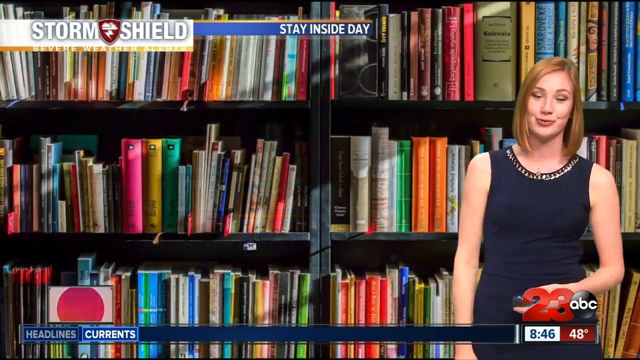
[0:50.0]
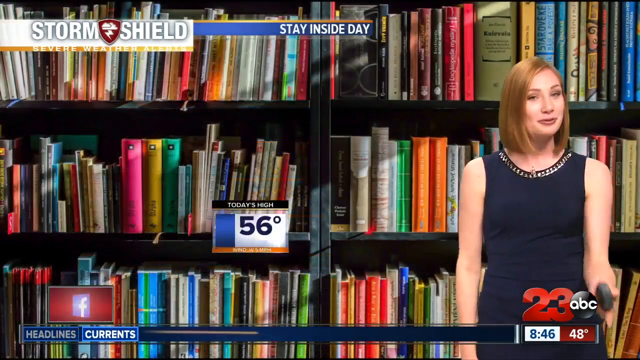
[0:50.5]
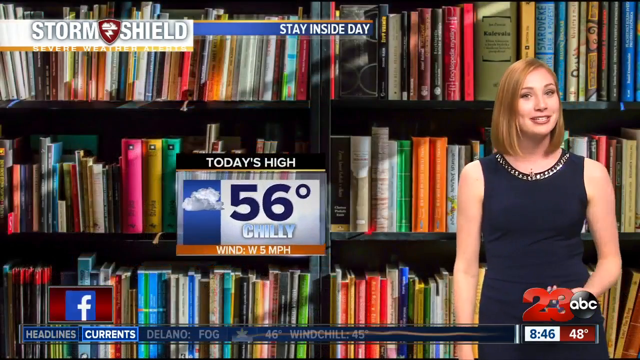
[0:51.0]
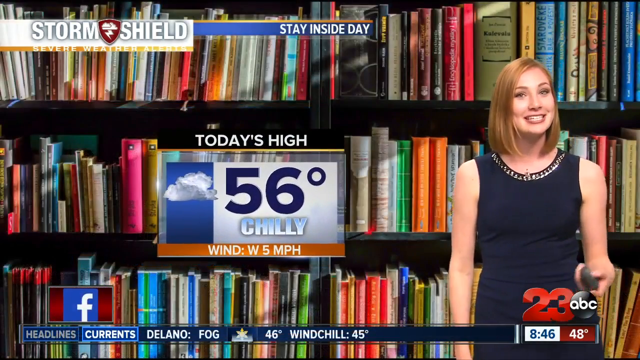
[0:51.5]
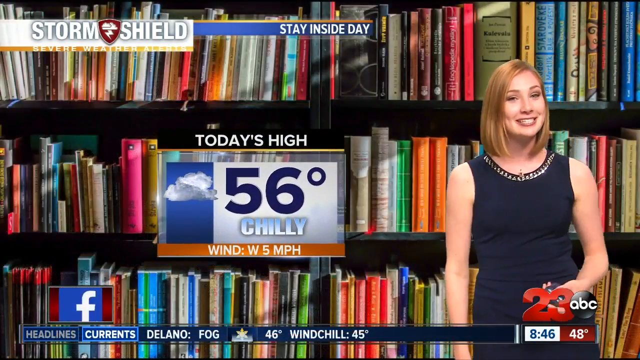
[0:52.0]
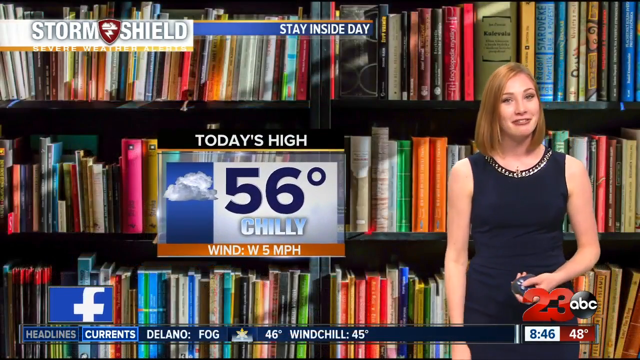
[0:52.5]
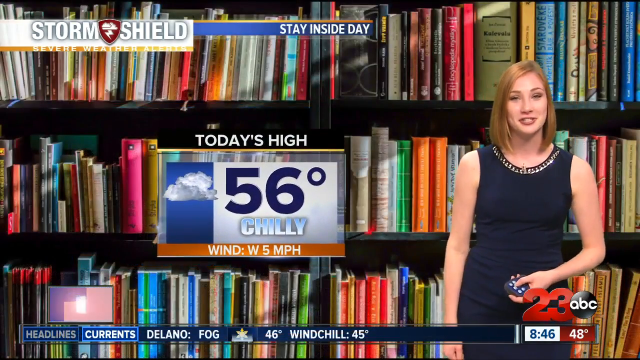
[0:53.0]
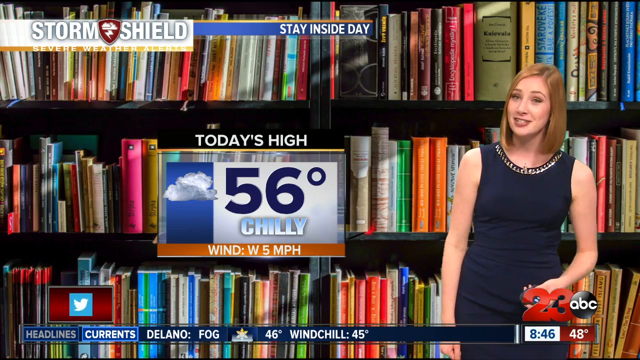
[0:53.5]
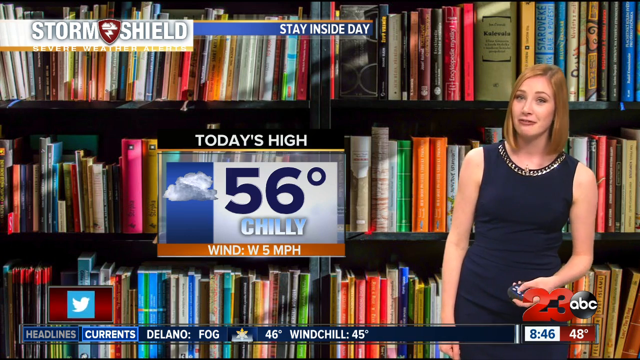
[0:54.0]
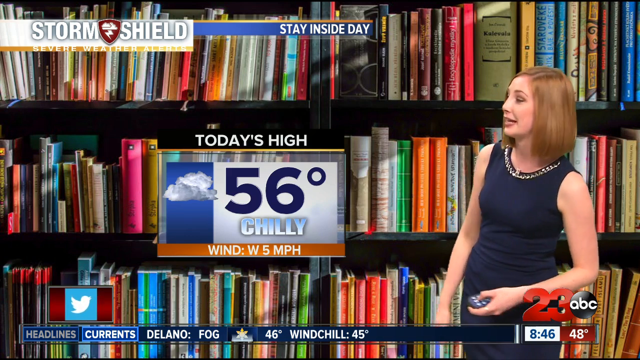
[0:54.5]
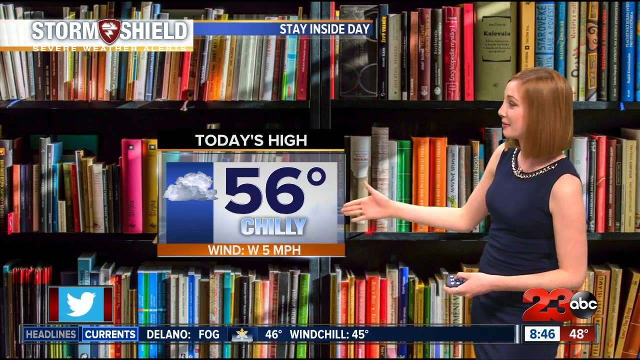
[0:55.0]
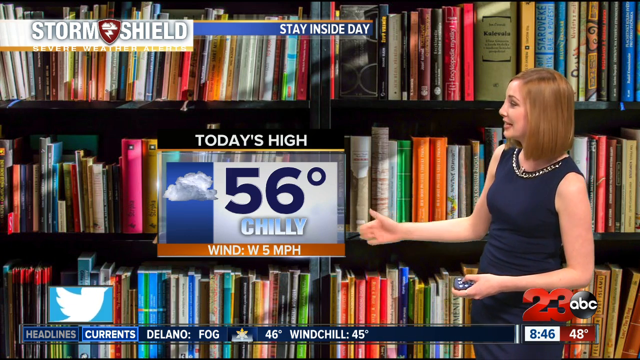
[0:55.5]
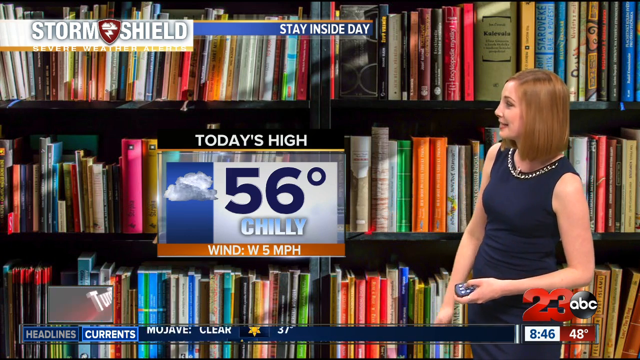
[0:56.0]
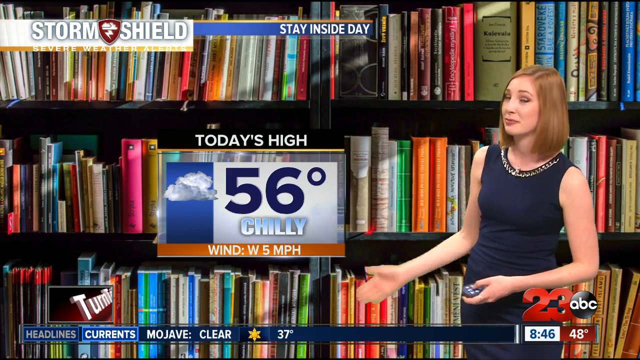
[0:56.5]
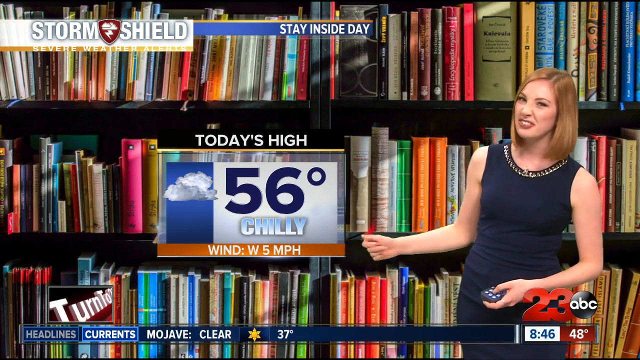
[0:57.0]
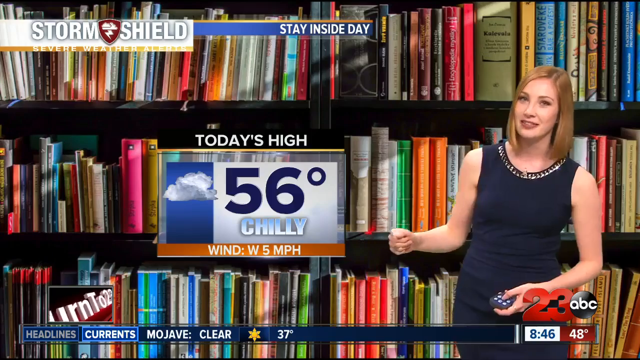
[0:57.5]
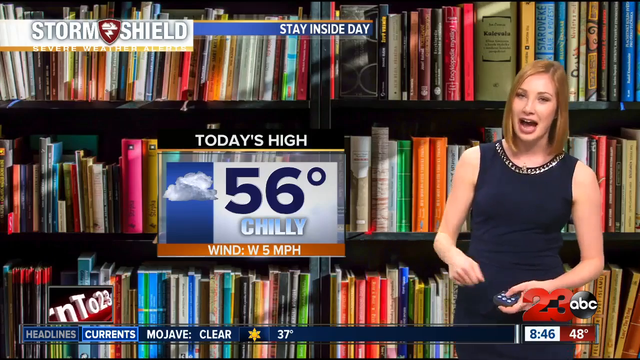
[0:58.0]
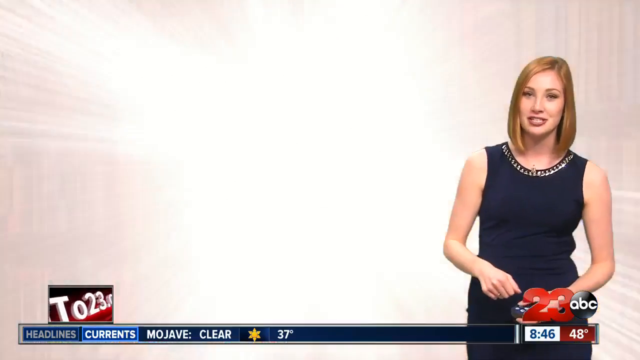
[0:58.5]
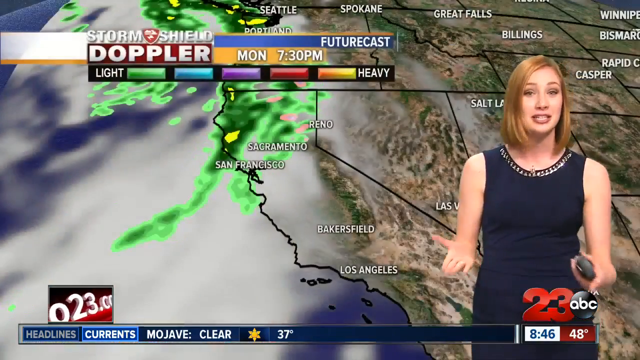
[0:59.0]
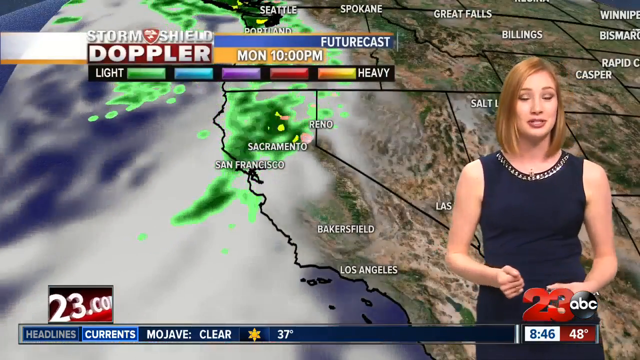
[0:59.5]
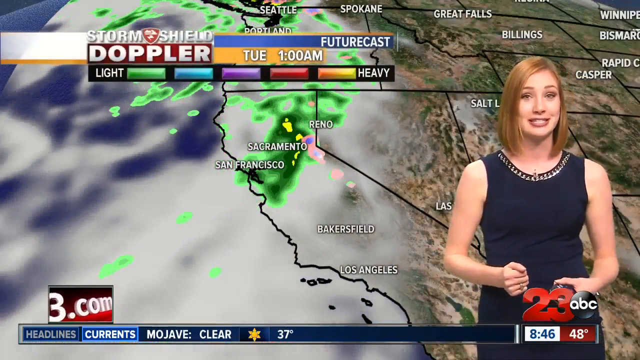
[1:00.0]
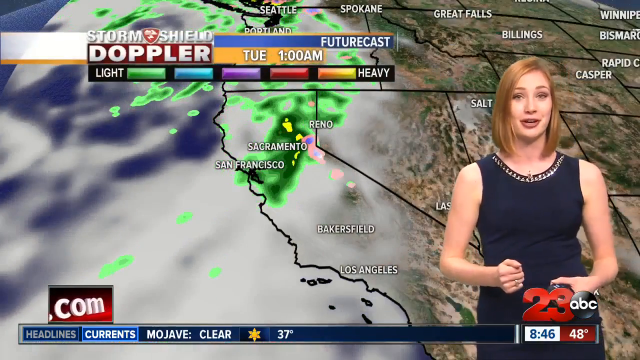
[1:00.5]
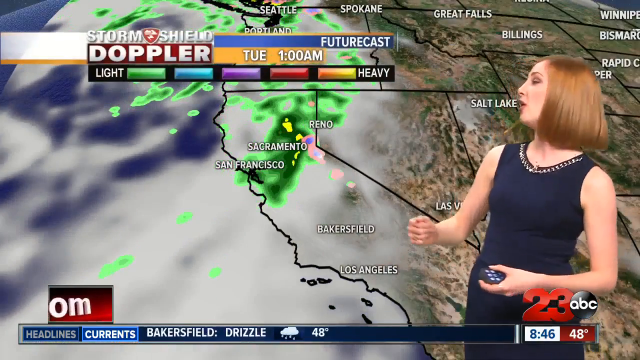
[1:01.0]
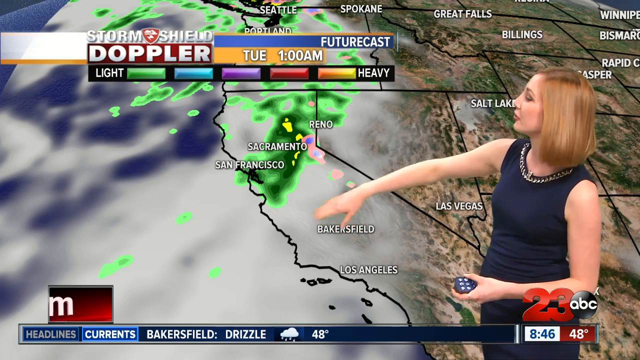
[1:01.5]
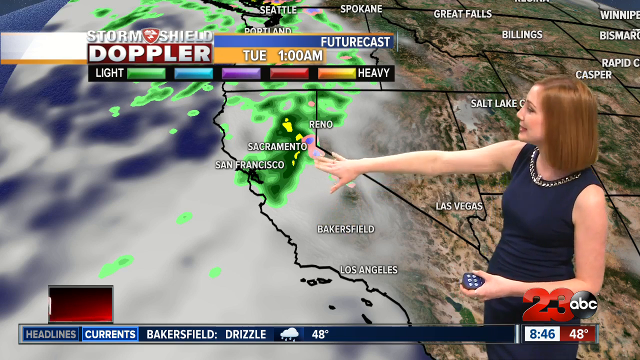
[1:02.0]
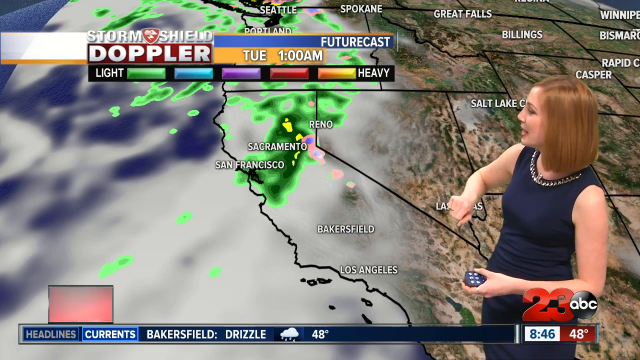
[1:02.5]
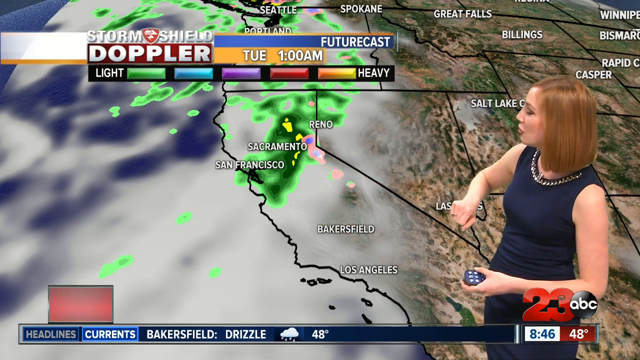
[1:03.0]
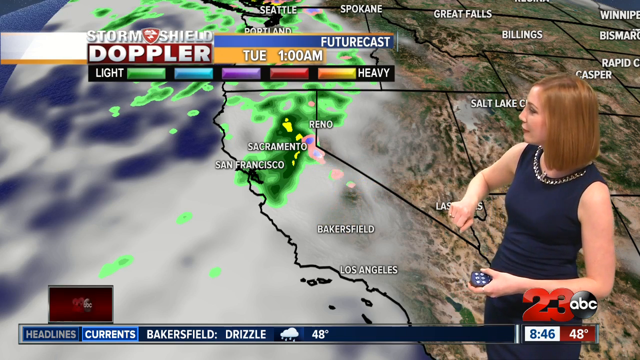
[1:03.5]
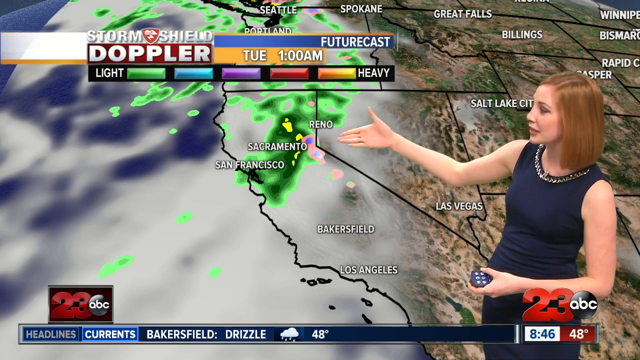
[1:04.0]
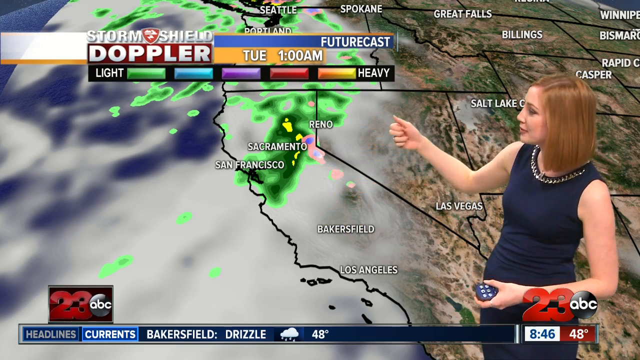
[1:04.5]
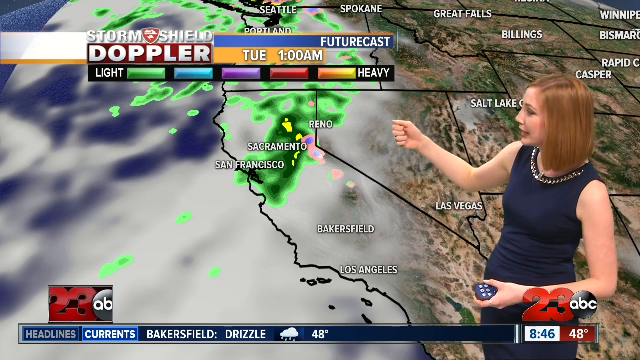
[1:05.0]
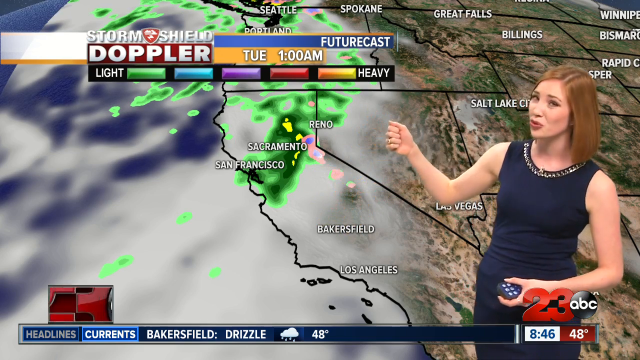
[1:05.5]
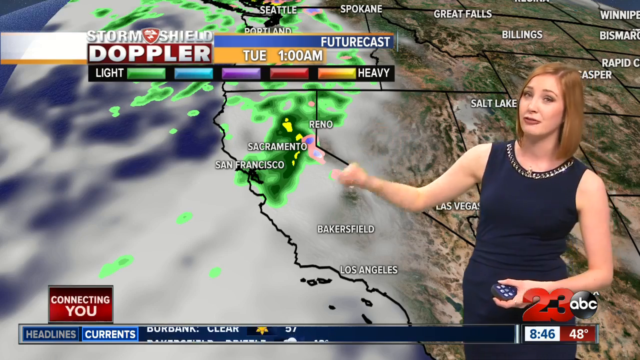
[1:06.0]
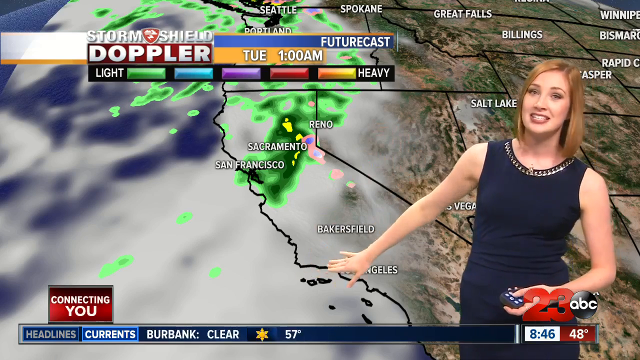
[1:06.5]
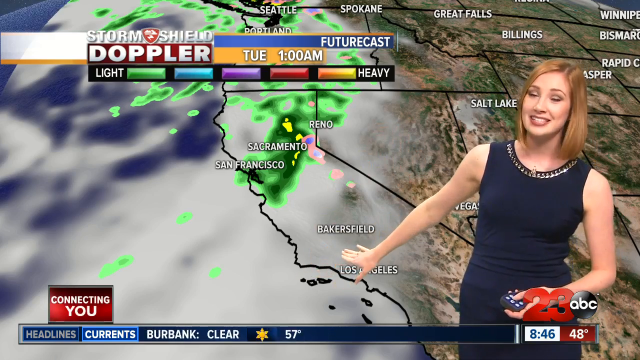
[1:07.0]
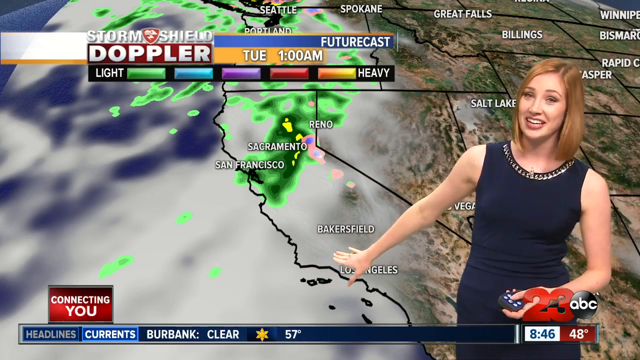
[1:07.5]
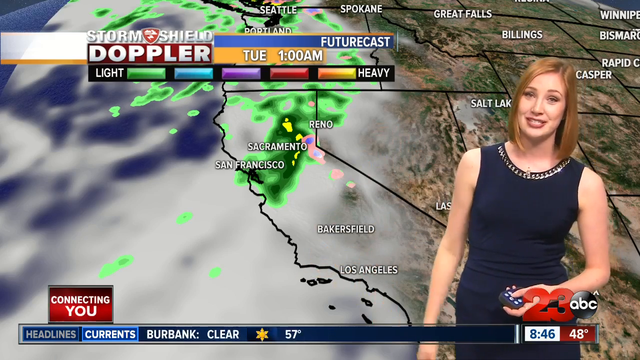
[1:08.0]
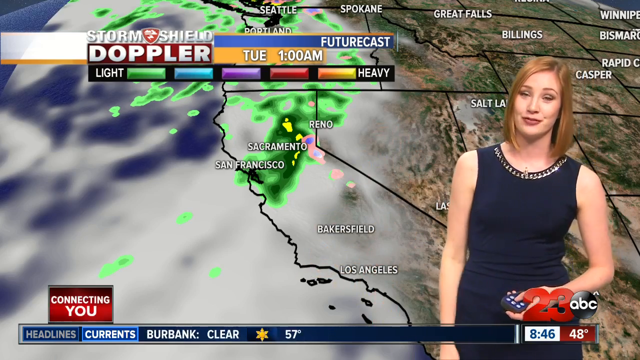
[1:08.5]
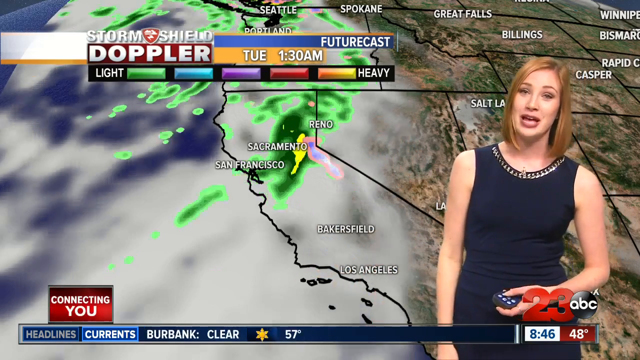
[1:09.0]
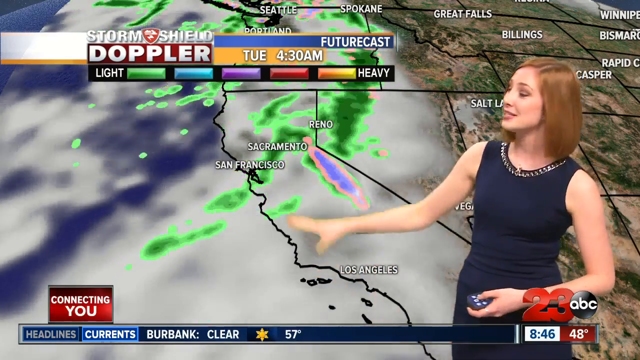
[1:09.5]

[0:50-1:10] The woman is still in the room filled with books, ranging from small to huge. The title "Stay Inside Day" is displayed above her head next to the "storm shield" label. She shows Today's High forecast at 56 degrees, with wind at "W 5 MPH" and a white cloud next to the number 5. She continues to carry the remote in her left hand. She then moves to a Doppler future forecast, light to heavy, showing different cities, with "Tuesday, 1 am" displayed. The forecast moves from city to city, showing where the wind, rain or storm will be at that day and time. She keeps pressing the remote to change cities and moves her right hand to point closely at the areas, and green spots are shown.